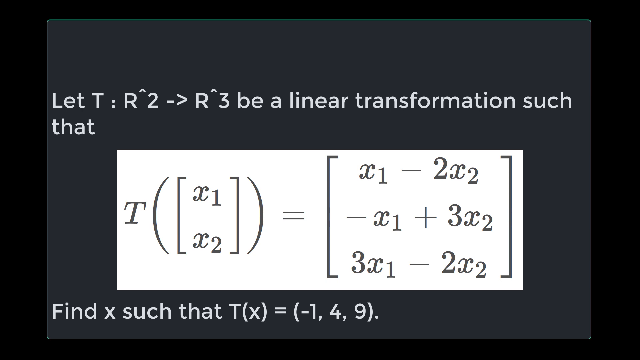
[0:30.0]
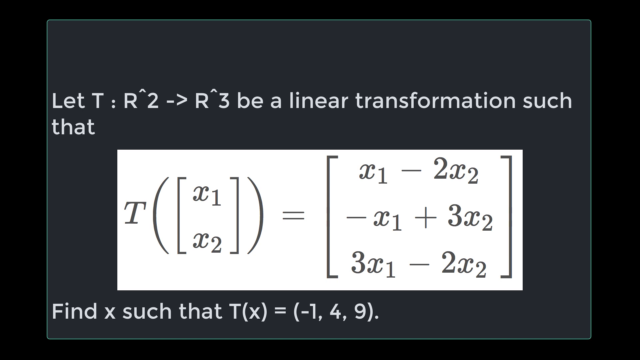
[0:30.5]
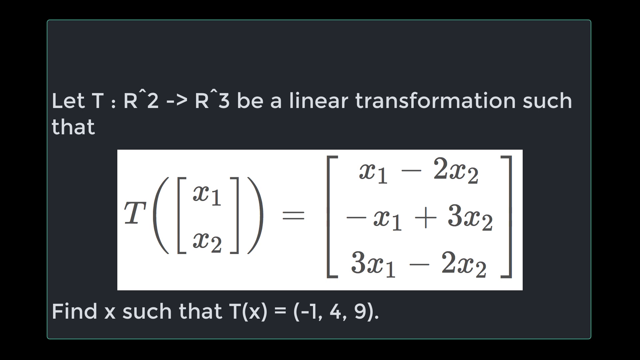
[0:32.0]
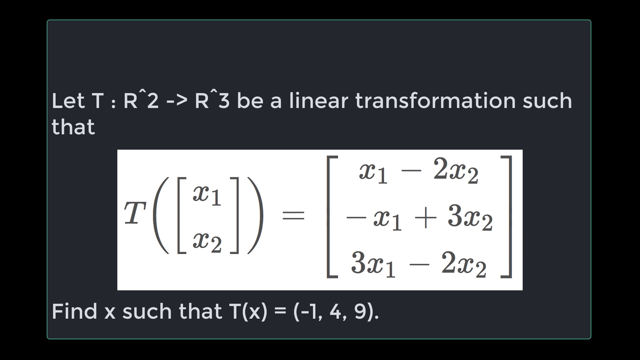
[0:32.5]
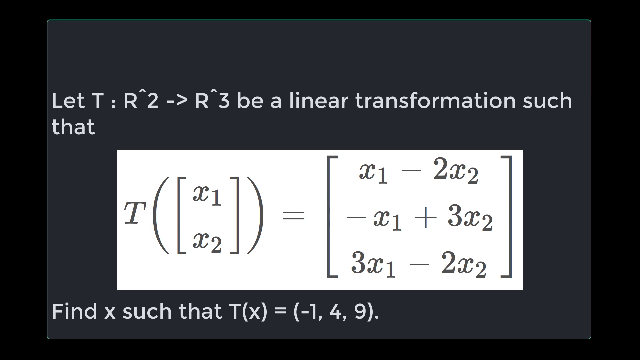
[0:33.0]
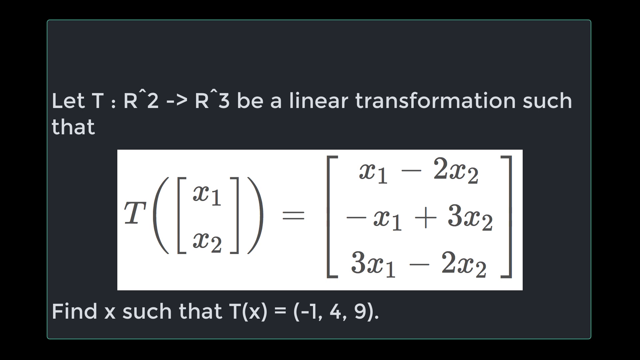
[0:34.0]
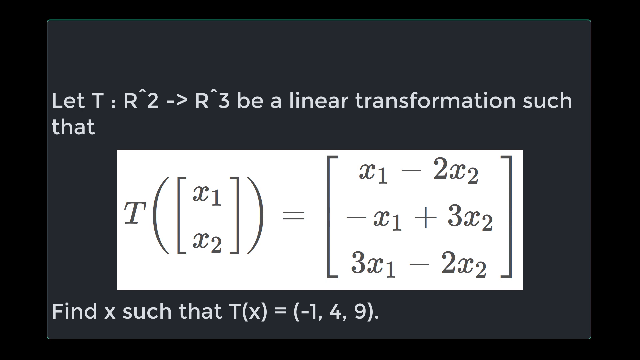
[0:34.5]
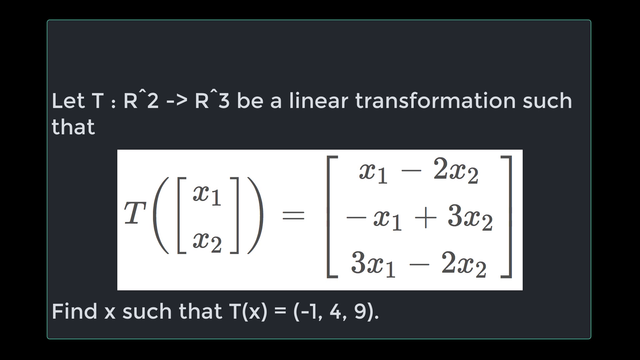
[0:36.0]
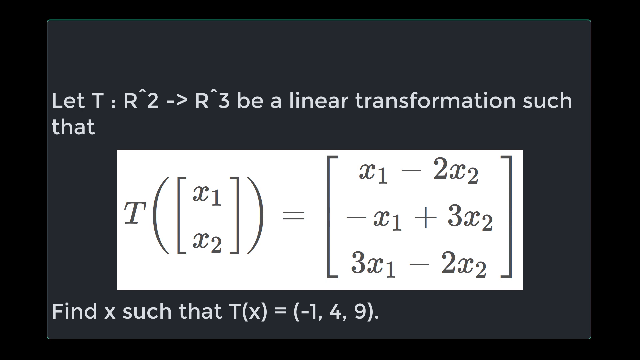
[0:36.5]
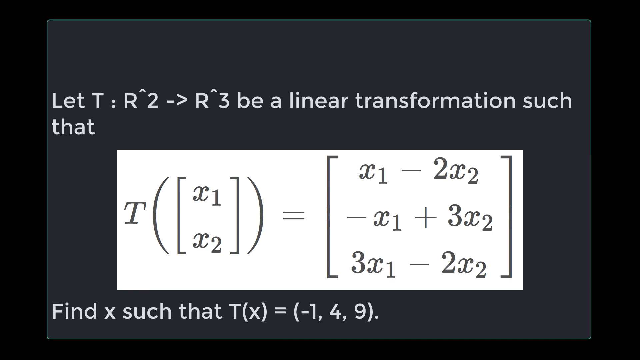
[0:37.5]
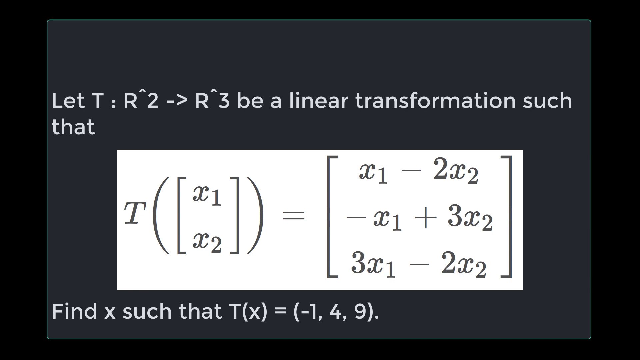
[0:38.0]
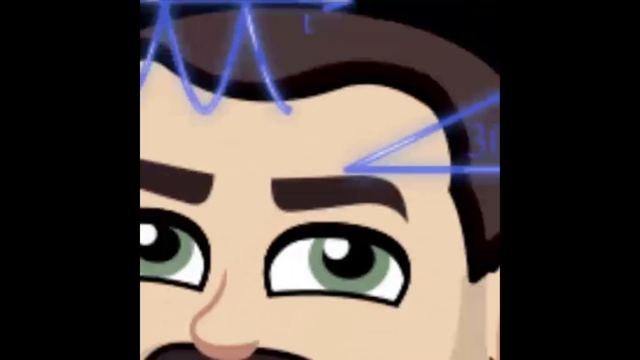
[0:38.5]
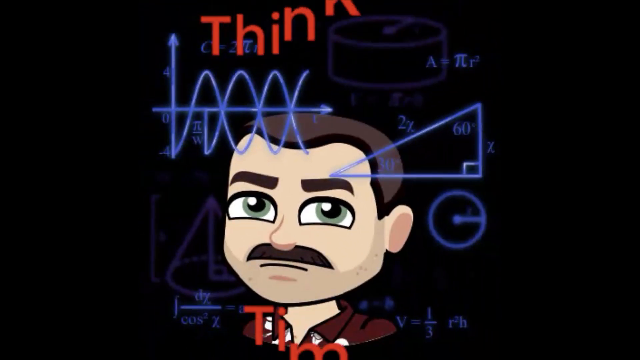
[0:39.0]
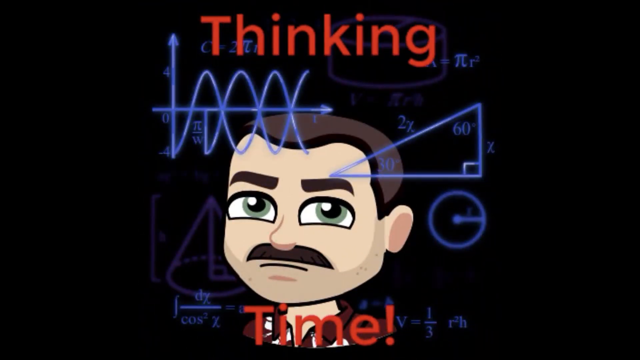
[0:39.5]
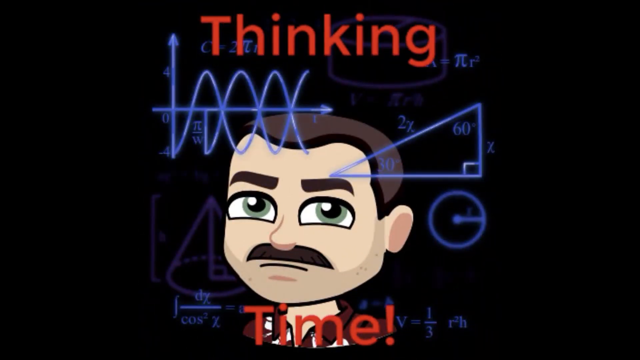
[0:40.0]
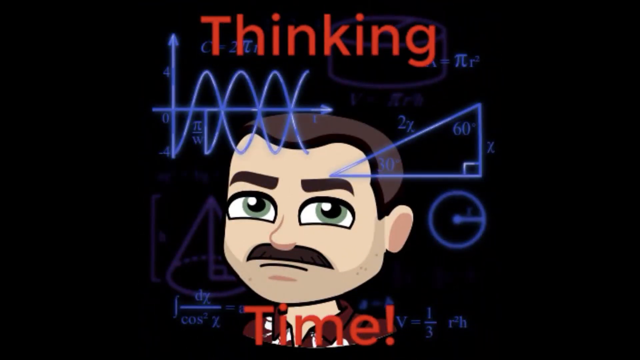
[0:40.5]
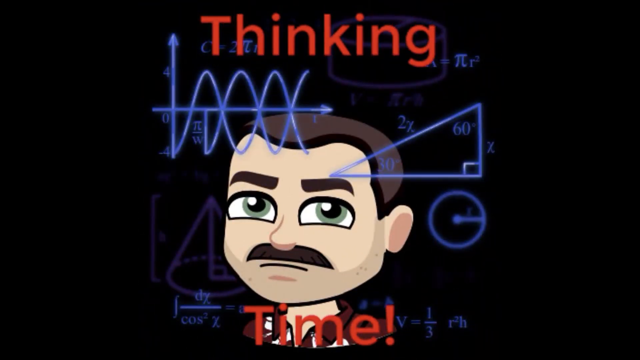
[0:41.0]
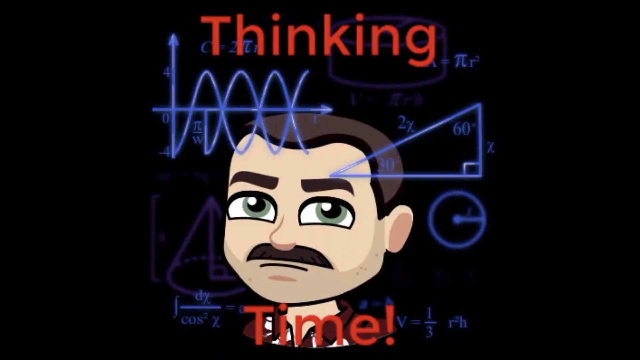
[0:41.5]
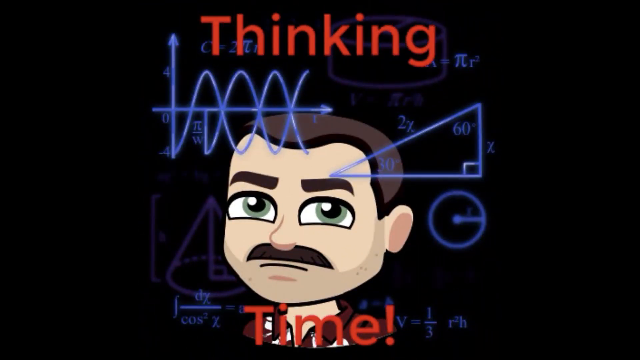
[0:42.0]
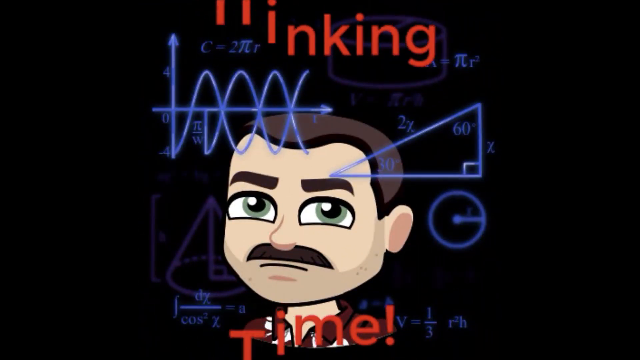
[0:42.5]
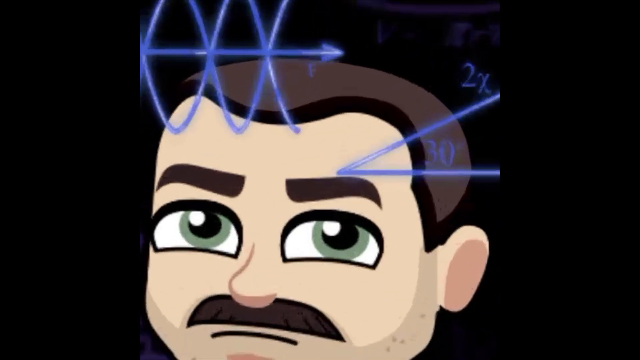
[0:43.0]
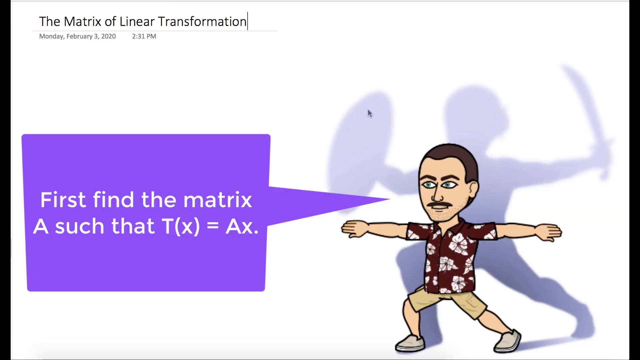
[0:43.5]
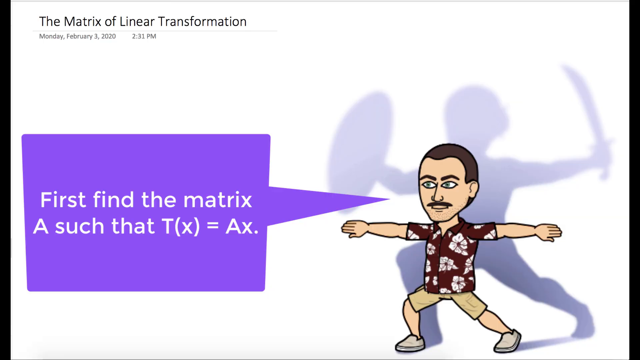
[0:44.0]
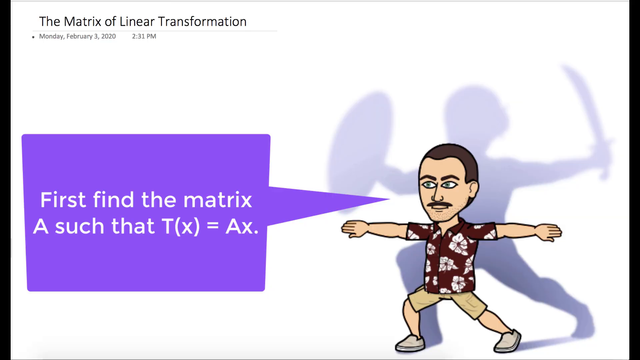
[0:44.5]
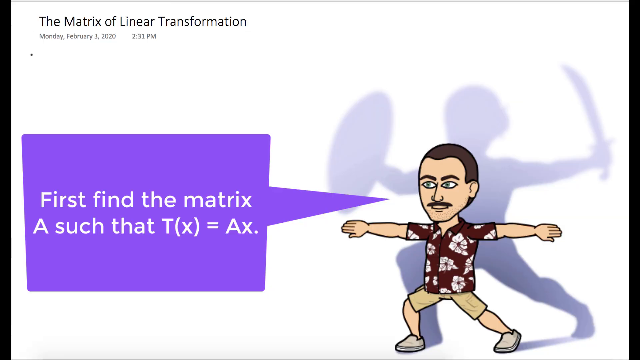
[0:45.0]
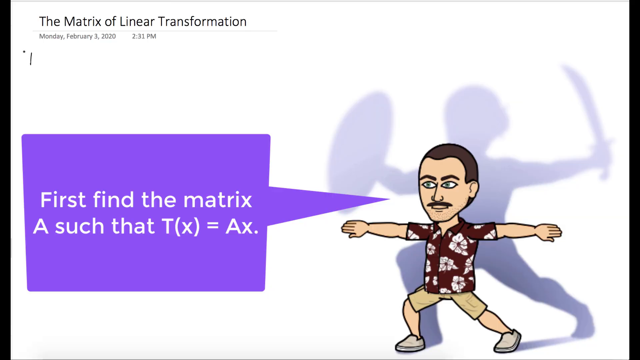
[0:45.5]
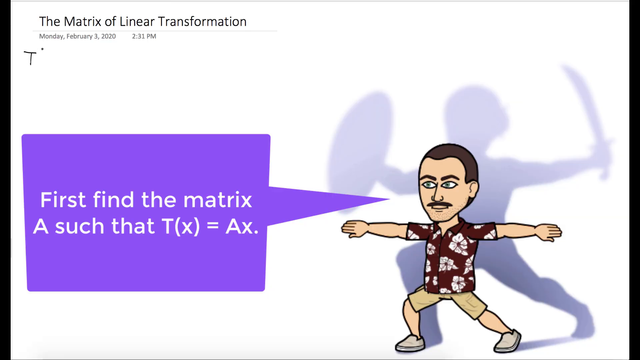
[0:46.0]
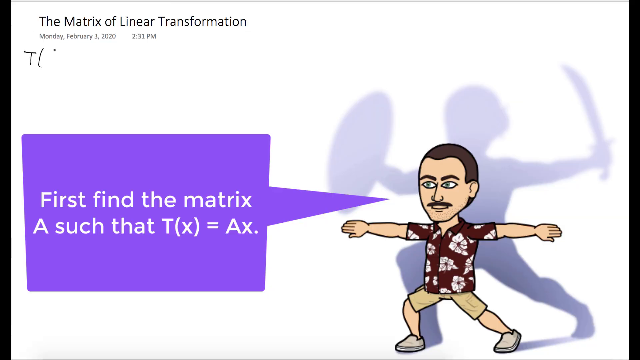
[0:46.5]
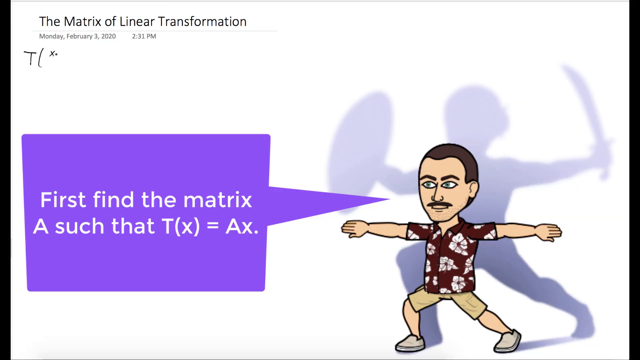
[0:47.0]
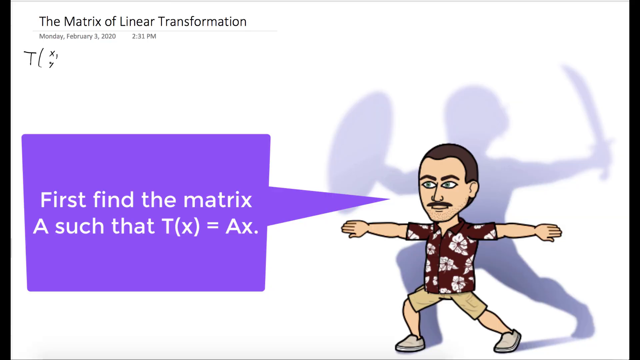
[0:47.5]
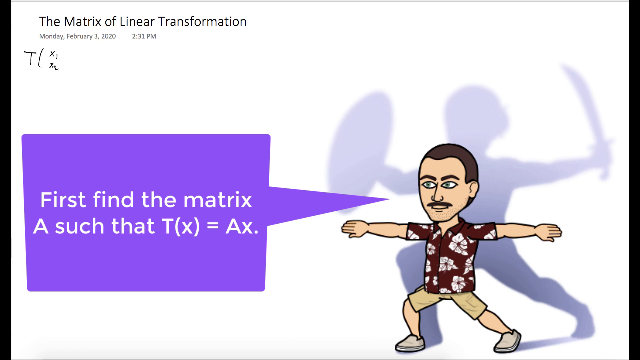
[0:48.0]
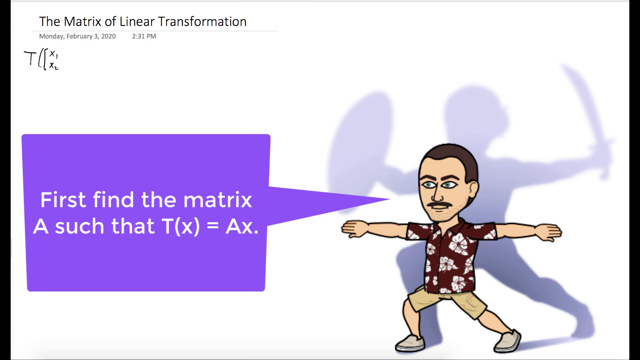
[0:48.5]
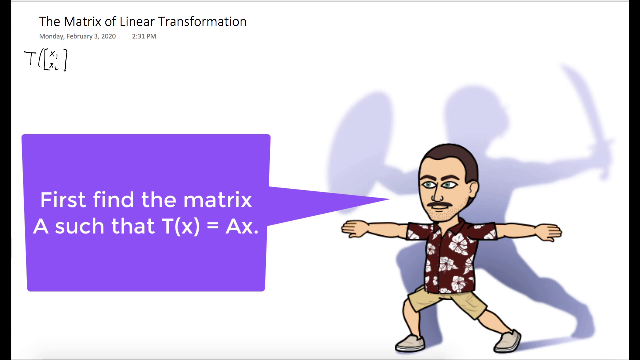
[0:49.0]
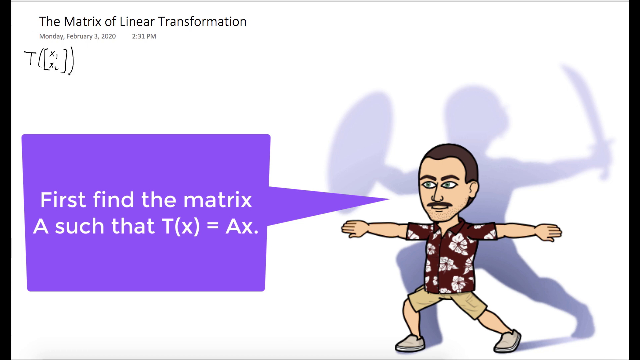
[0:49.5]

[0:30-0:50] The same problem stays on screen, and he still does not work on it. Partway through, a graphic appears reading "thinking" at the top and "time" at the bottom, with an exclamation point next to "time." On it there is something like a right-angled triangle on the right side and a spiral-looking coil at the top left with an arrow going through it and above it. The view then zooms in on the graphic. The thinking time graphic also shows the same man looking at another character; he looks like he is thinking, with his eyes turned up. Then another screen shows the man doing a yoga pose with a cartoon character, with a speech bubble coming out of him.